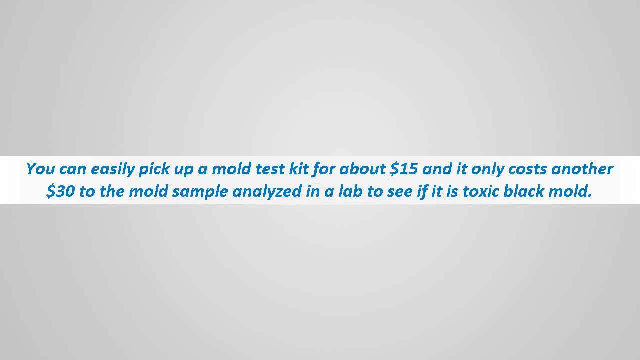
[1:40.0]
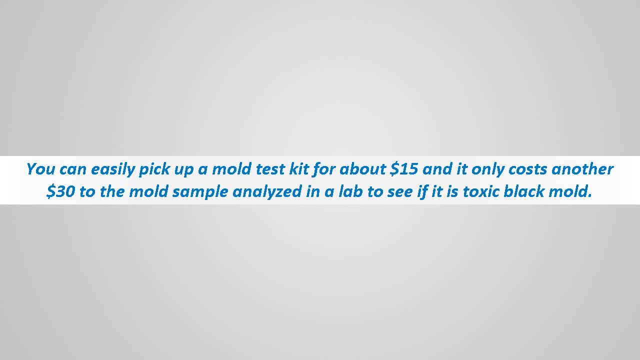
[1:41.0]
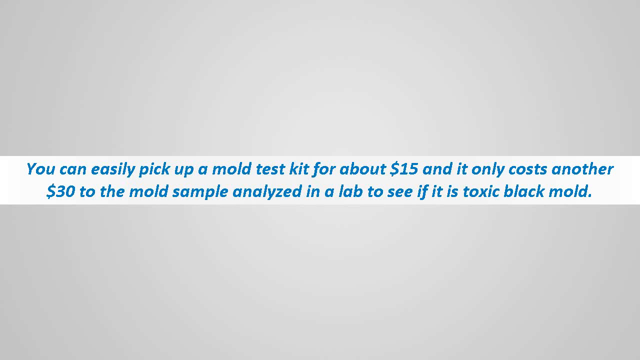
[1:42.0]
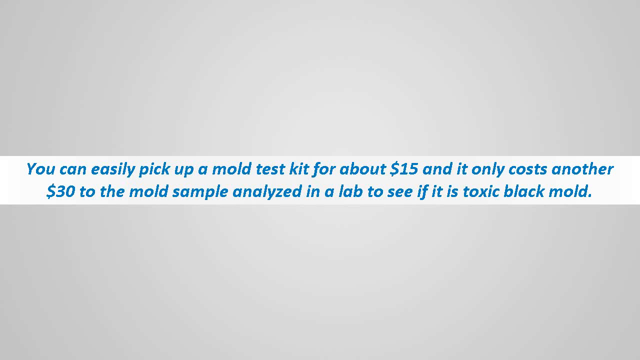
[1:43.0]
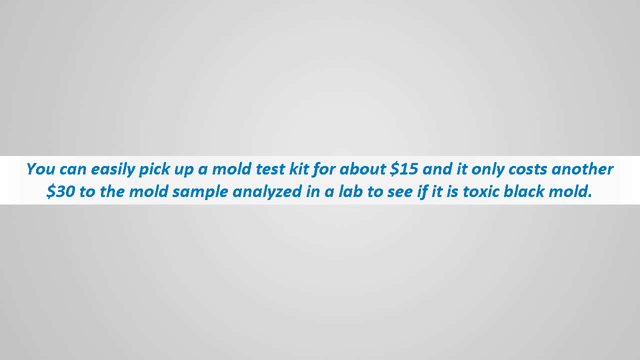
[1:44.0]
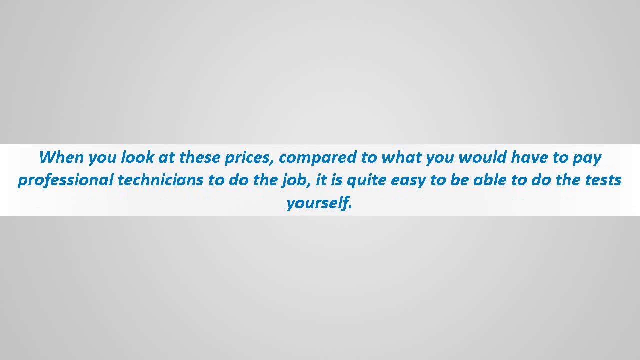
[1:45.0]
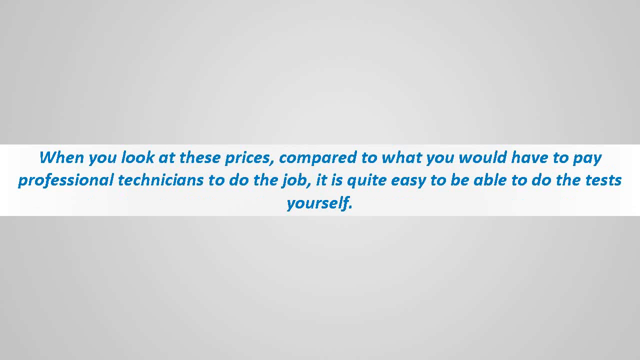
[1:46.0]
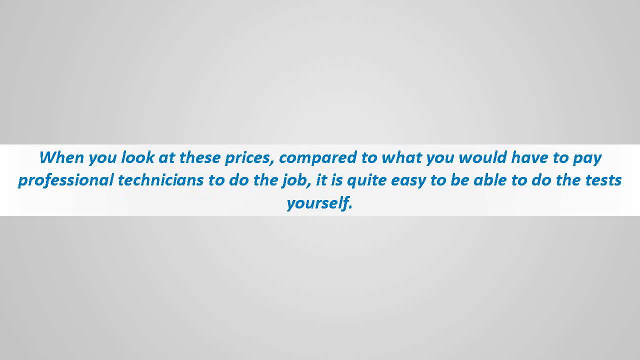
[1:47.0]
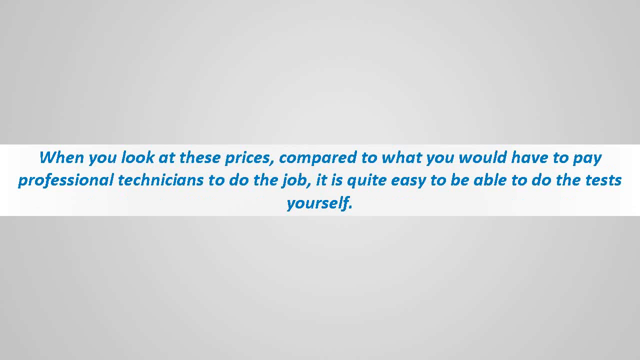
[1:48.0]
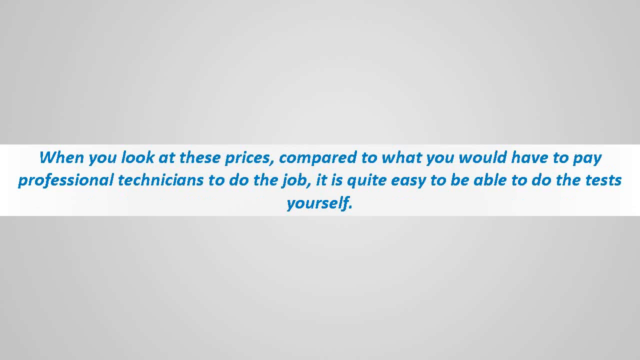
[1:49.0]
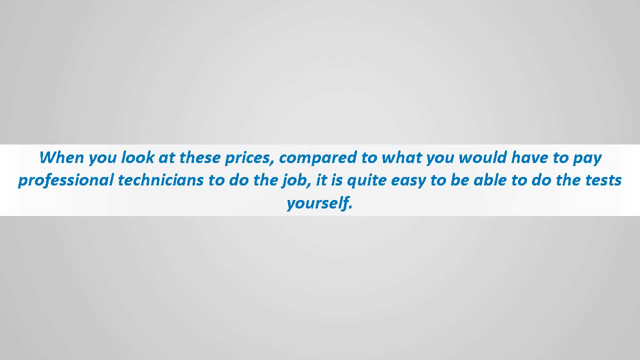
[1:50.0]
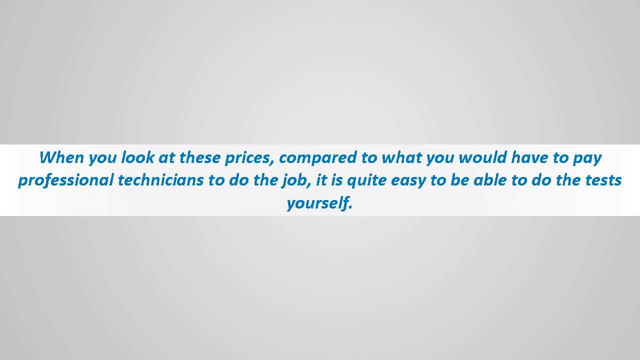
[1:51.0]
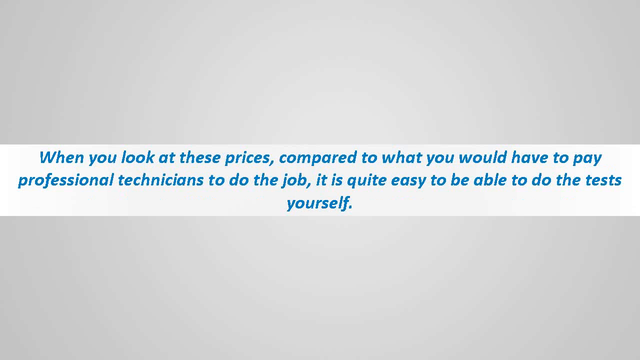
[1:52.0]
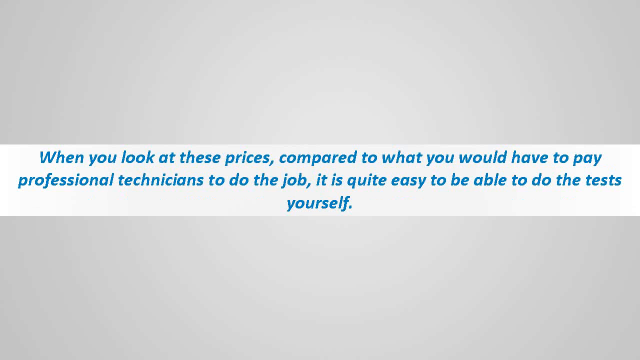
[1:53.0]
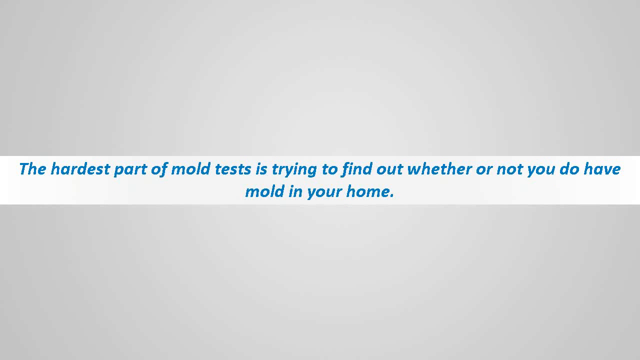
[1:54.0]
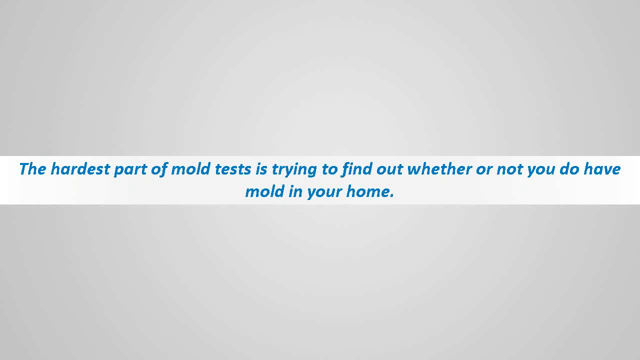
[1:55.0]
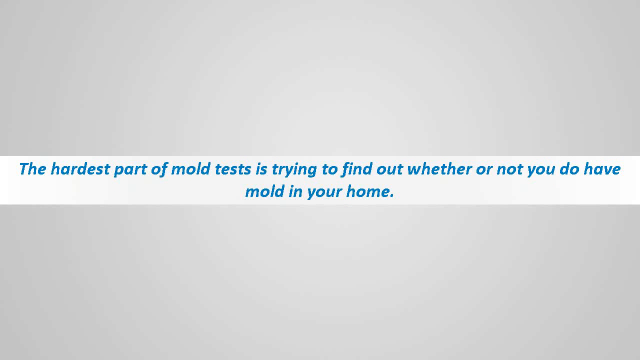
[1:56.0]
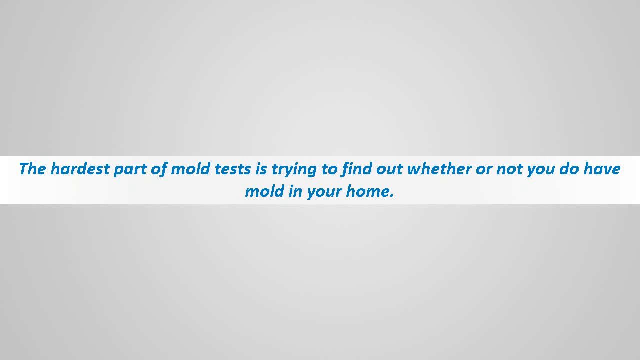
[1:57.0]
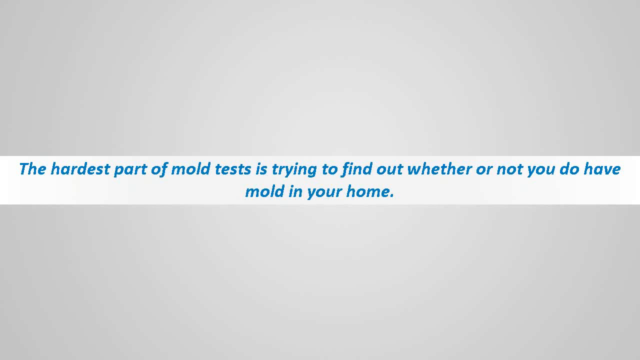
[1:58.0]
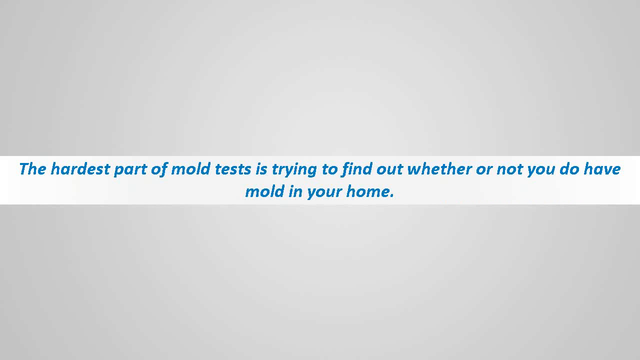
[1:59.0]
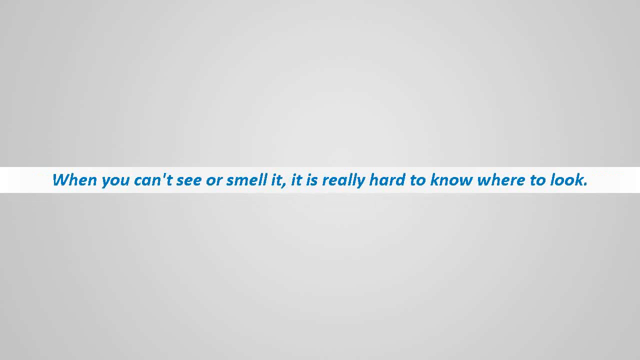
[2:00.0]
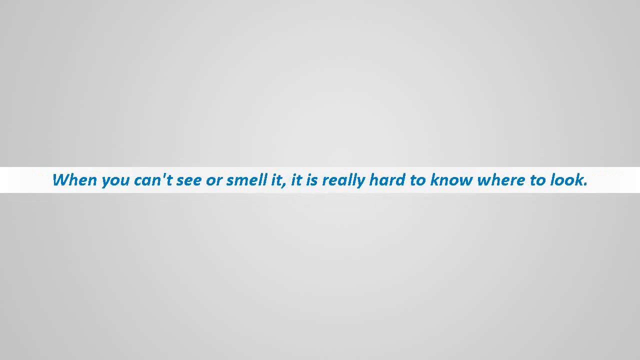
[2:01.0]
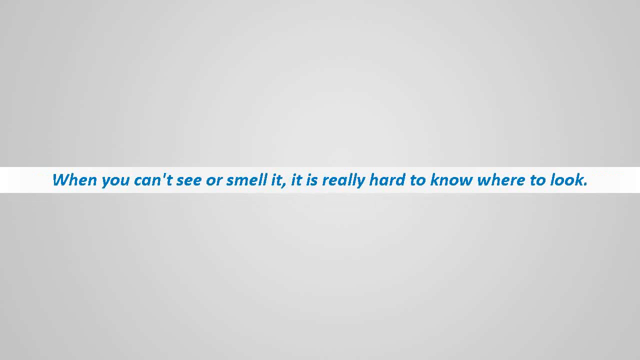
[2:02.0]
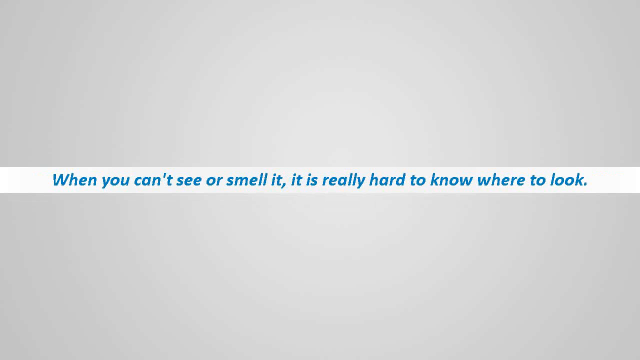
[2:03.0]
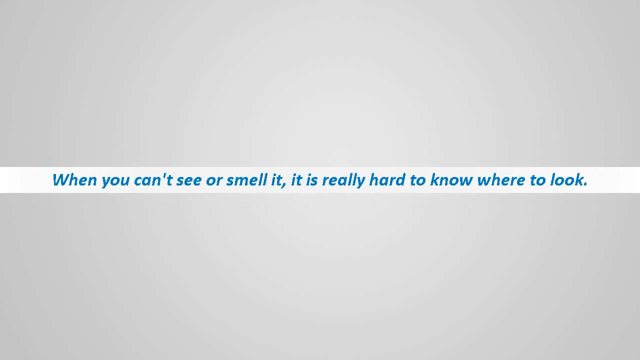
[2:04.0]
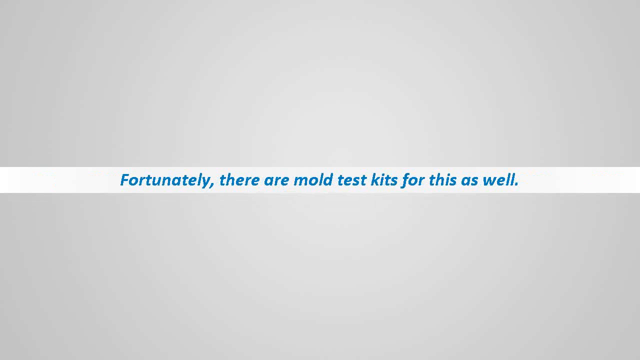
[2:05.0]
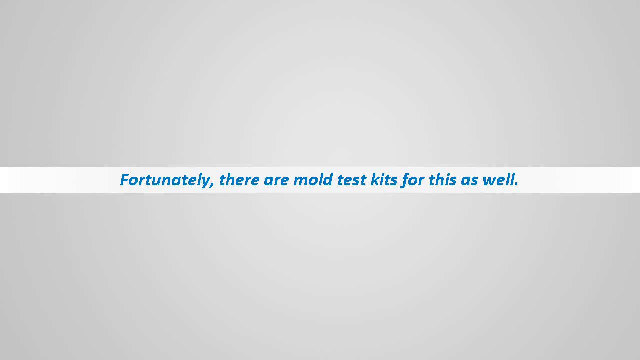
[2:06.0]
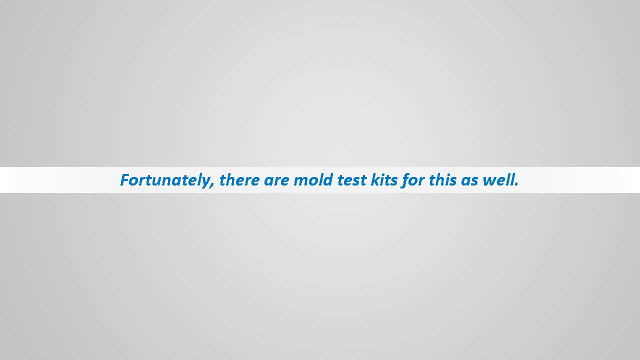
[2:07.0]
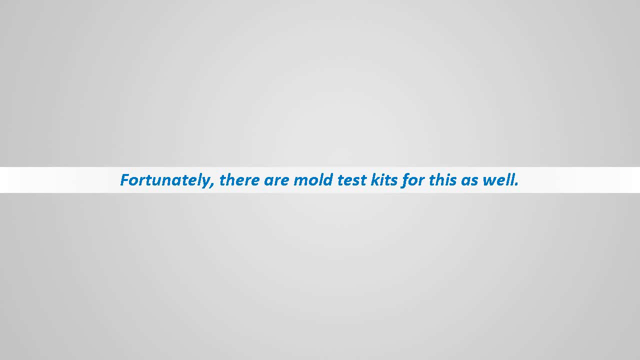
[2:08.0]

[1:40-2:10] The gray screen shows a white strip or block in the middle with all-blue text: "You can easily pick up a mold kit for about $15. And it only costs another $30" to have the mold sample "analyzed in a lab to see if it's toxic black mold." Additional text then appears: "When you look at these prices, compared to what you will have to pay professional technicians to do the job, it's quite easy to be able to do the test yourself."